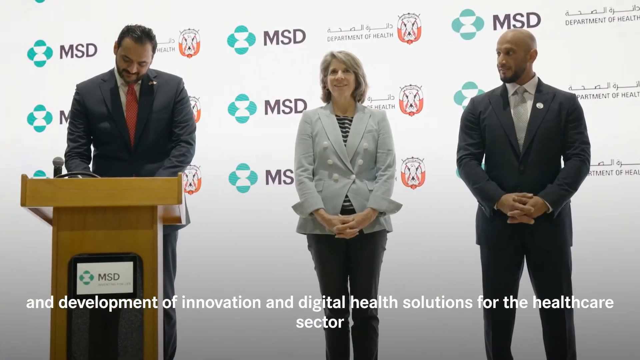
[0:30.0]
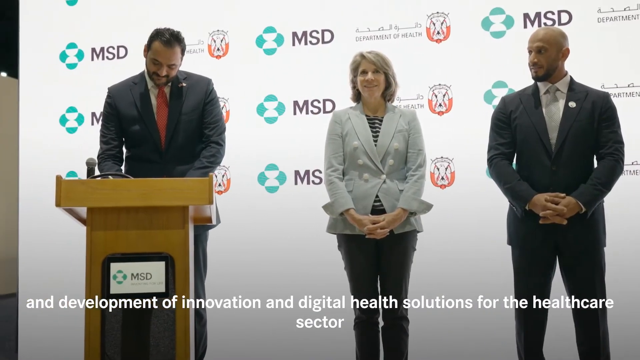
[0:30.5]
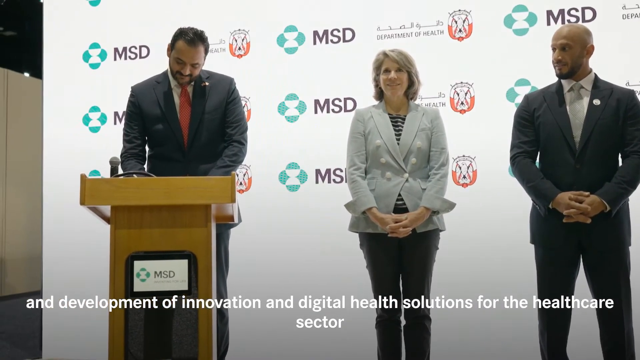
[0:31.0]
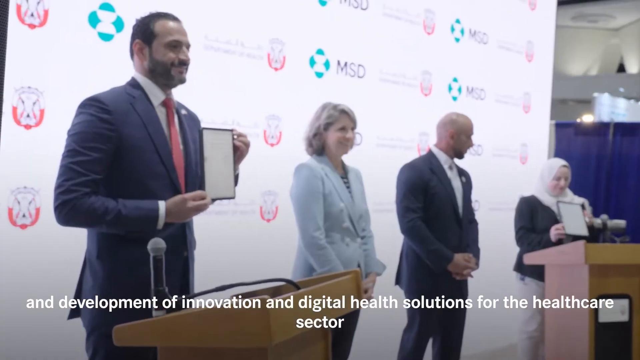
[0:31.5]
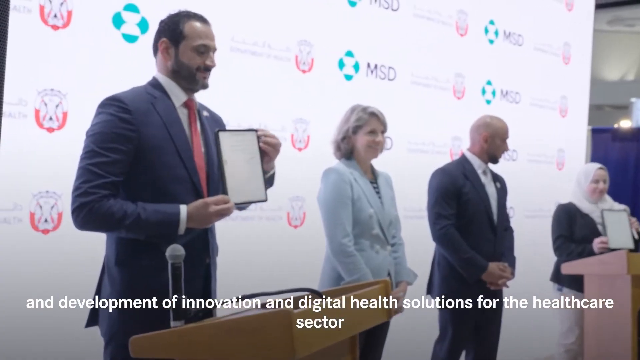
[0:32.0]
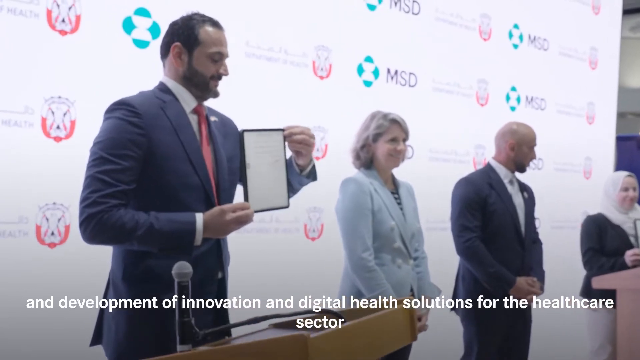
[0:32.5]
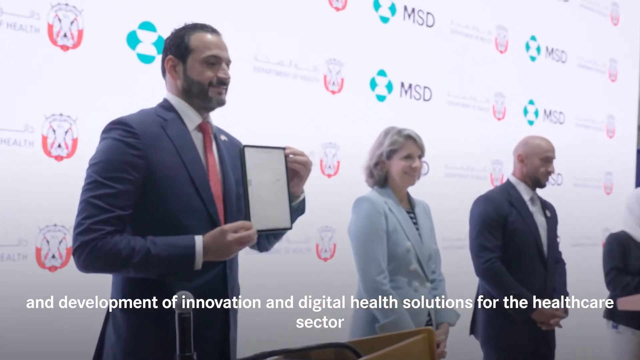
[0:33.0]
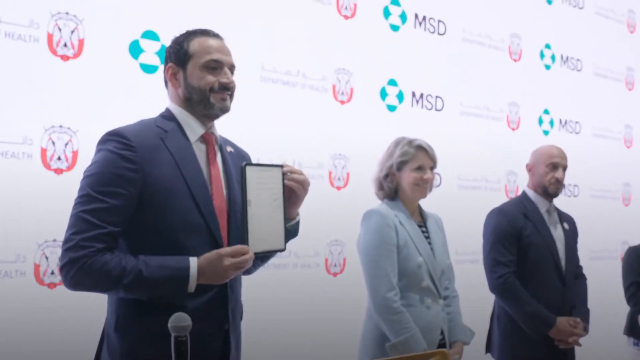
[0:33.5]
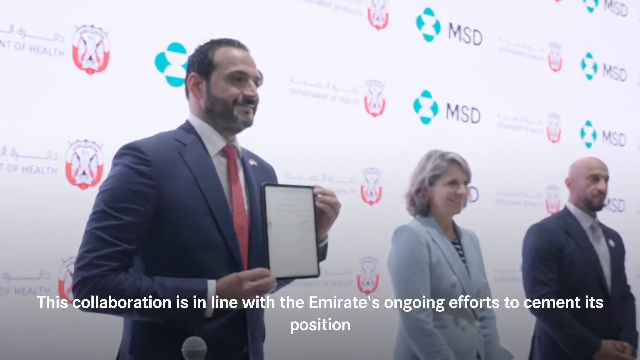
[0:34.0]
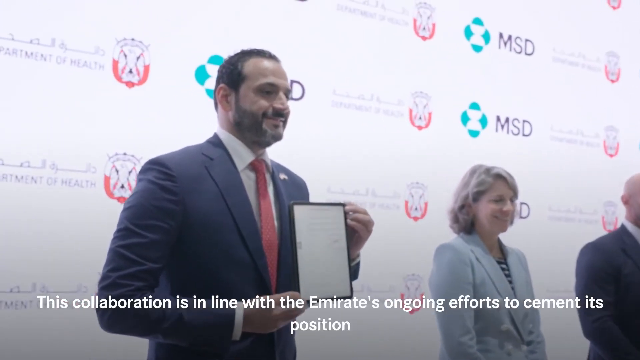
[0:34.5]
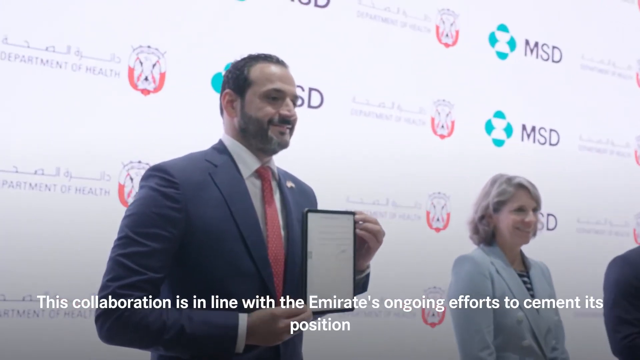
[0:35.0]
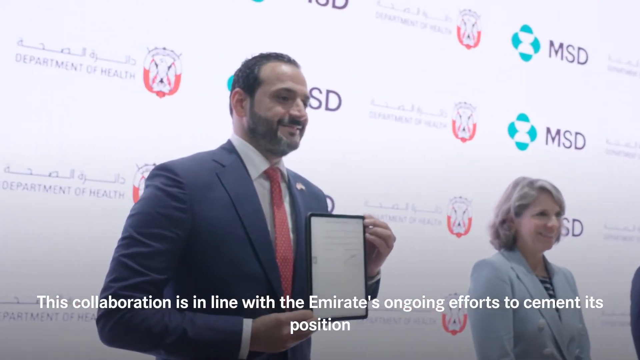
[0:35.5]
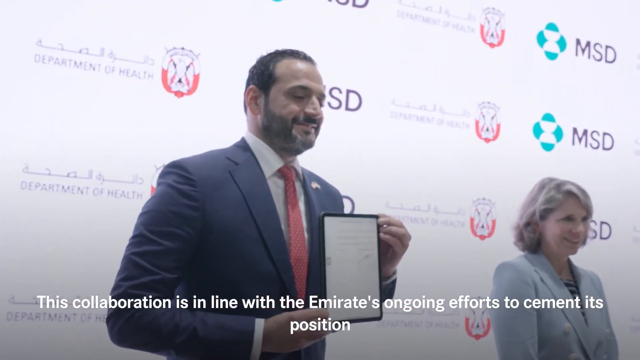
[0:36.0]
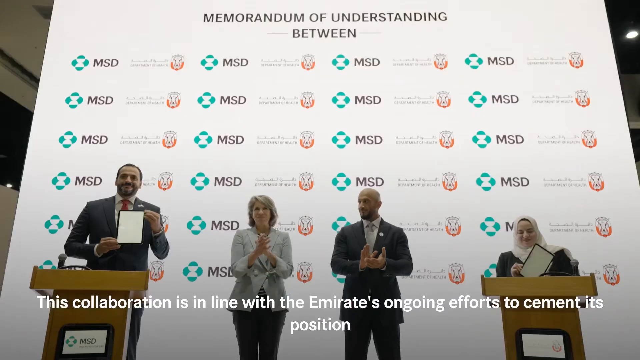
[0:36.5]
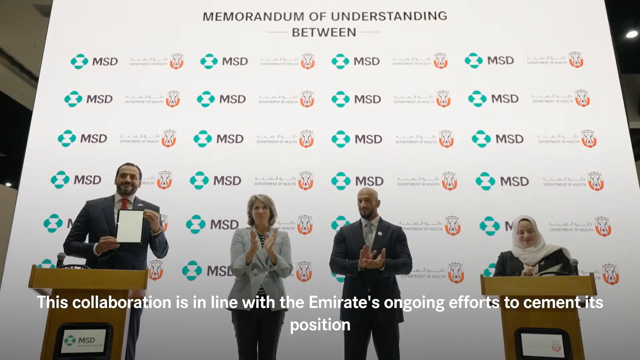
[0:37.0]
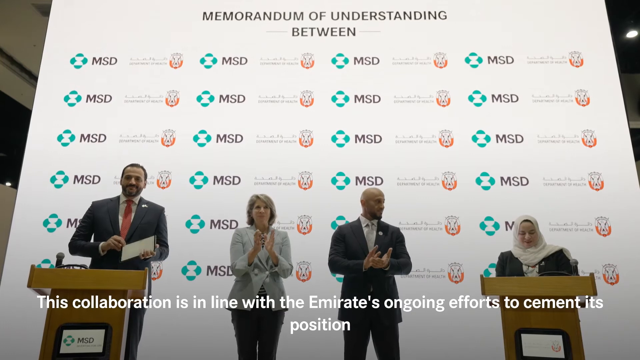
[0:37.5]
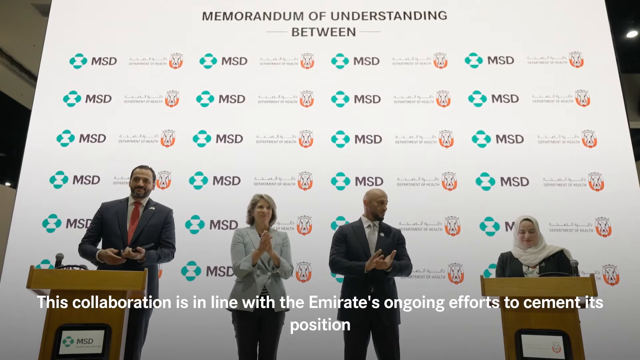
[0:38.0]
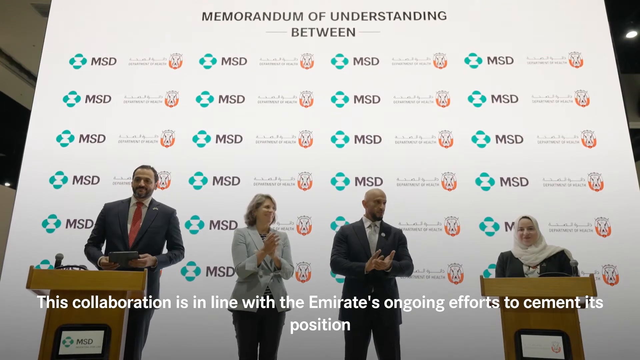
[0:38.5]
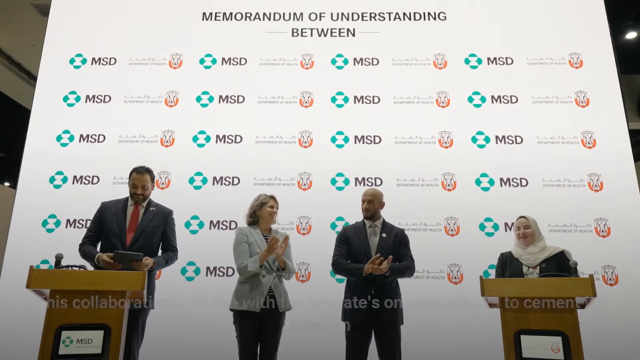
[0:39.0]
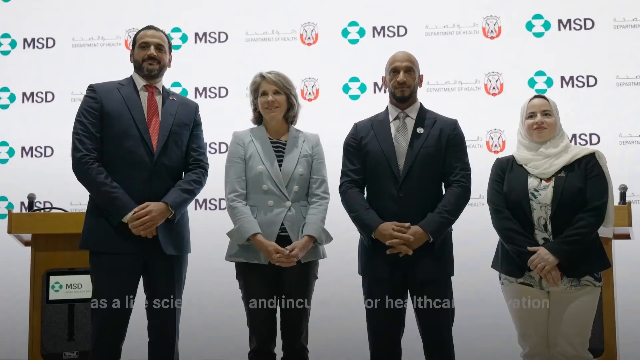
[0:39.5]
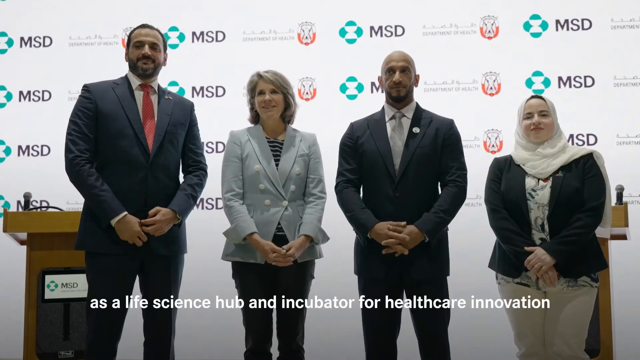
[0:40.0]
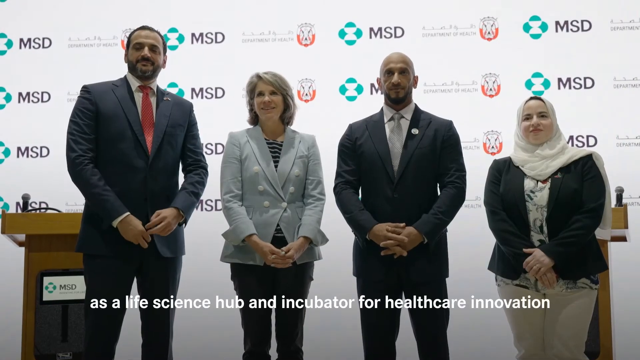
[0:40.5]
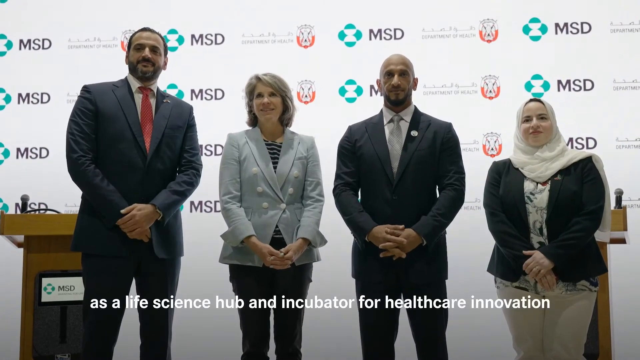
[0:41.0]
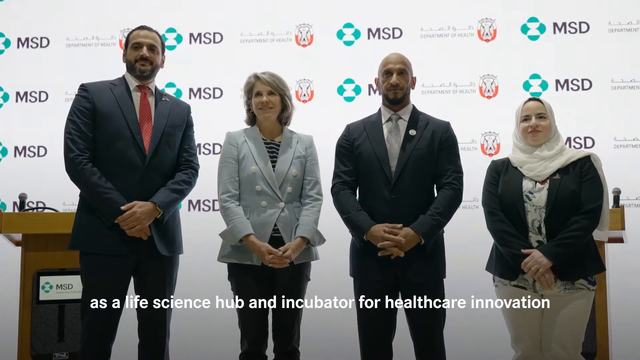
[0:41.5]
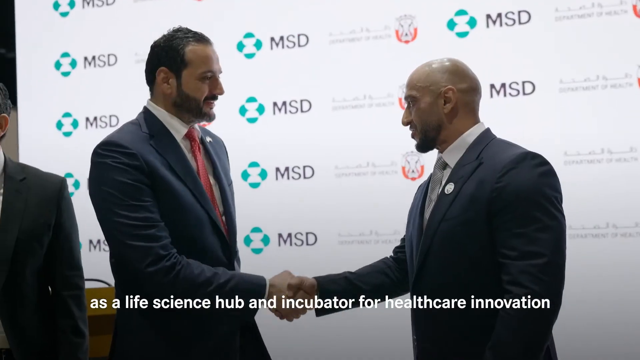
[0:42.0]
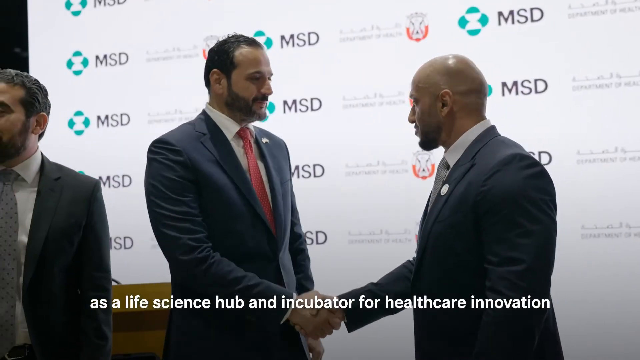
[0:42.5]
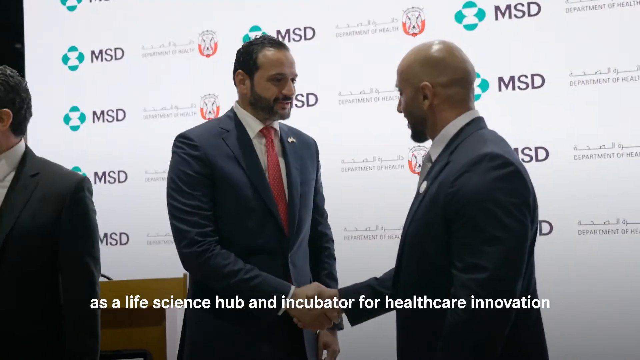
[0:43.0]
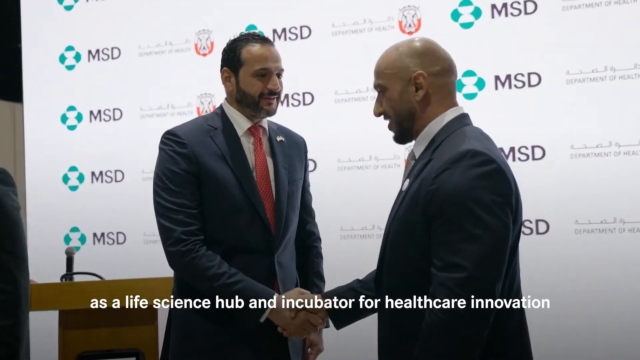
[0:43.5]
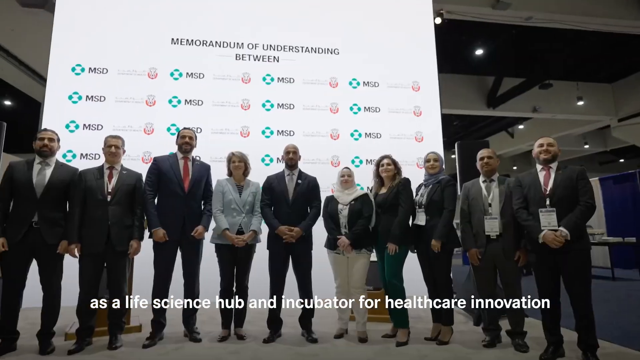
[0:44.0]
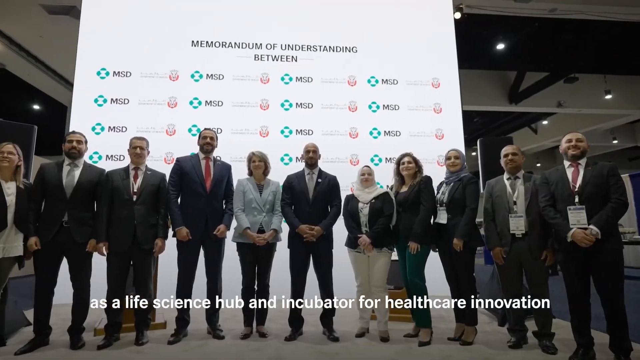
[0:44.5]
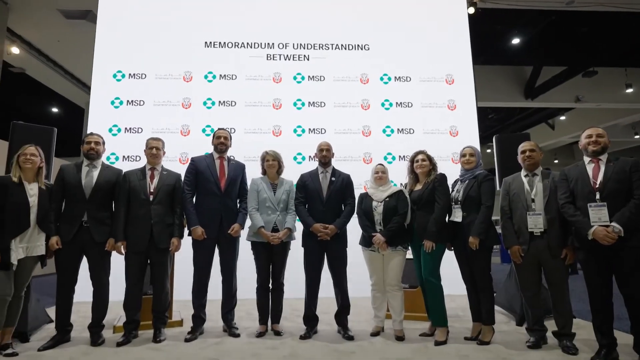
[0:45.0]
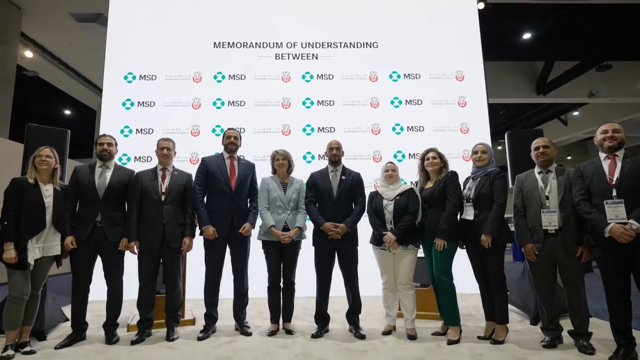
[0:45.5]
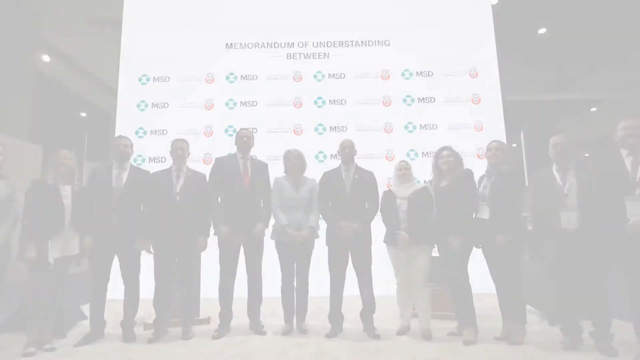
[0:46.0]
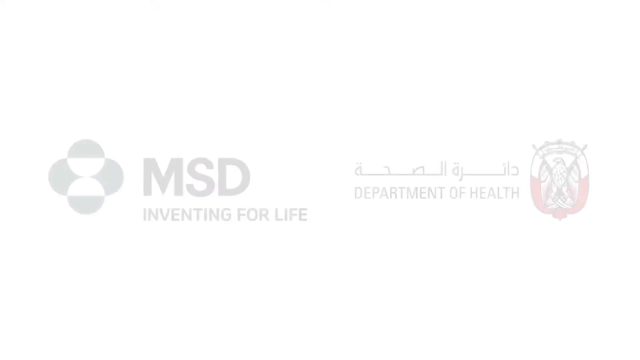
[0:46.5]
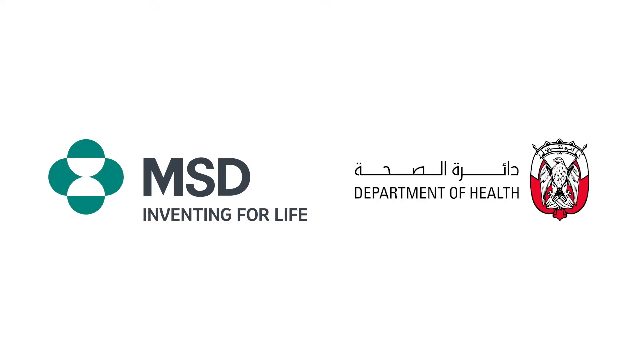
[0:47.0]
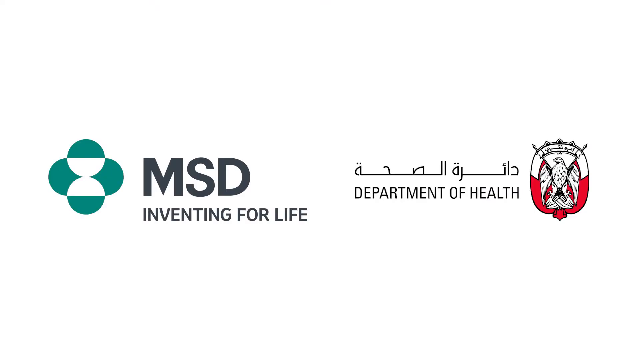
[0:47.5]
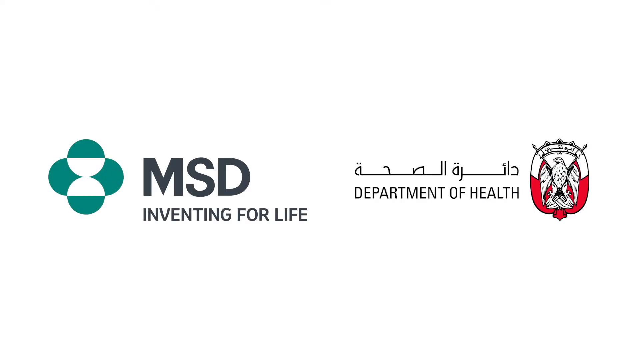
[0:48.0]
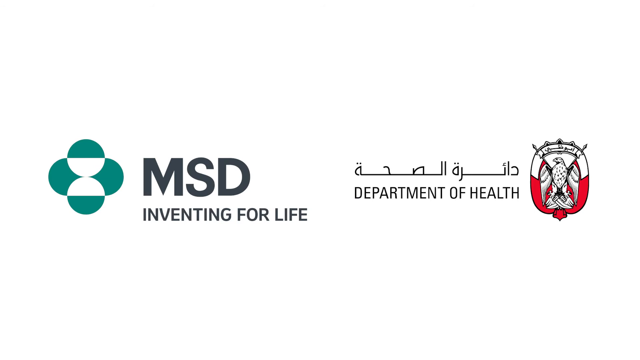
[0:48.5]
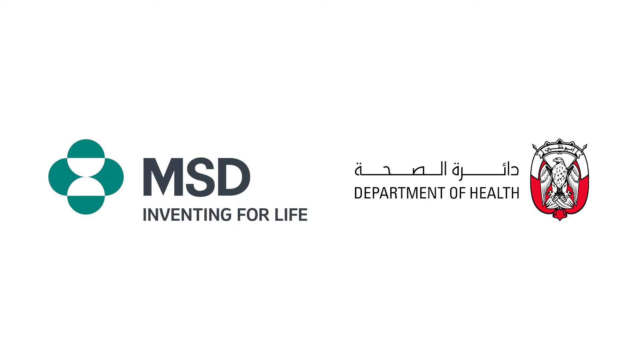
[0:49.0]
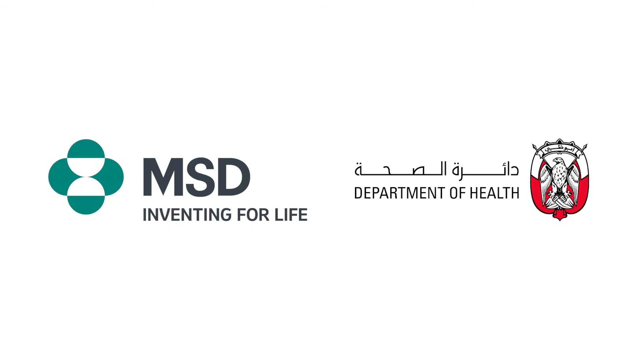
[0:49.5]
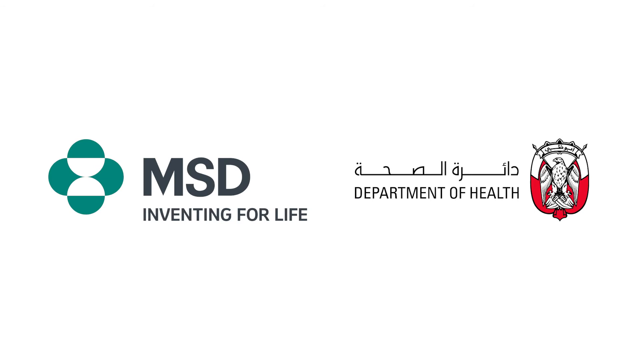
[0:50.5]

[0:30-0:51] Four people, two men and two women, are at a podium. The man standing at the podium receives a plaque award and holds it up, smiling. At the other end, a woman also holds up an octagonal-shaped plaque award. The camera then focuses more on the man holding up the plaque, who appears to be having his photo taken, while the other three people on the podium clap. Next, the four of them pose for a picture. He then receives a handshake from a man who was also on the stage. A group of 10 people then stands on the podium having their photo taken. The final image shows two company logos, "MSD Inventing for Life" and "Department of Health," with an image of a crest for the Emirates.